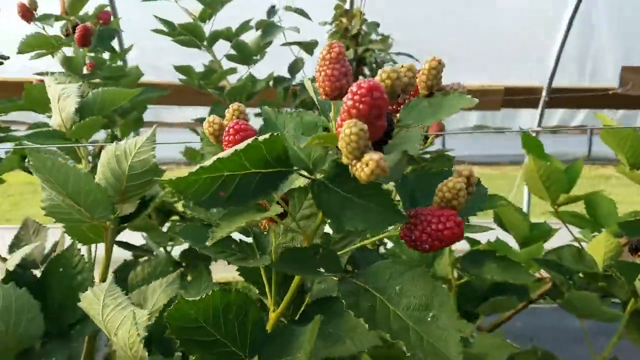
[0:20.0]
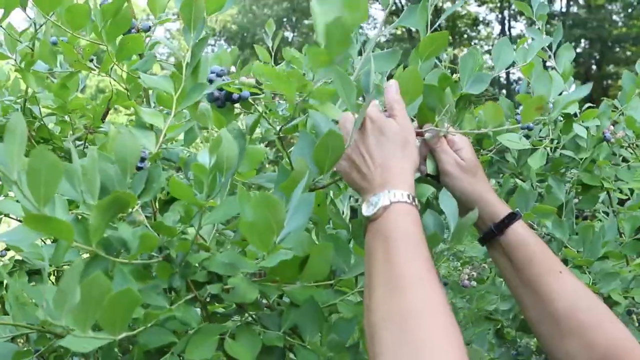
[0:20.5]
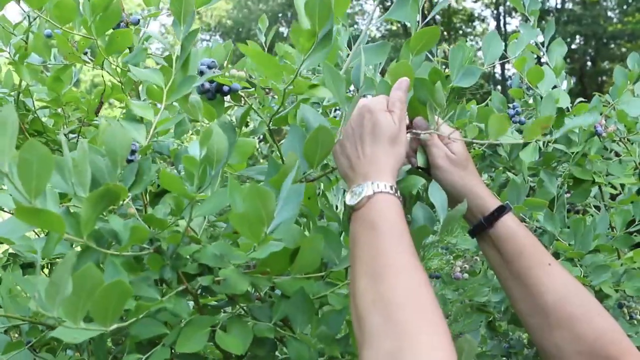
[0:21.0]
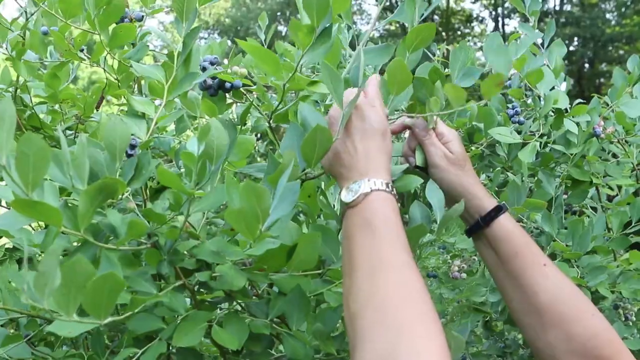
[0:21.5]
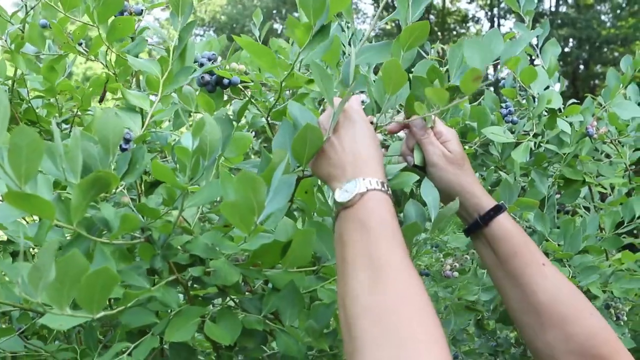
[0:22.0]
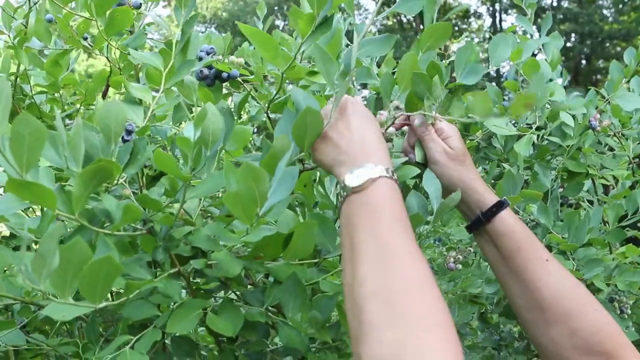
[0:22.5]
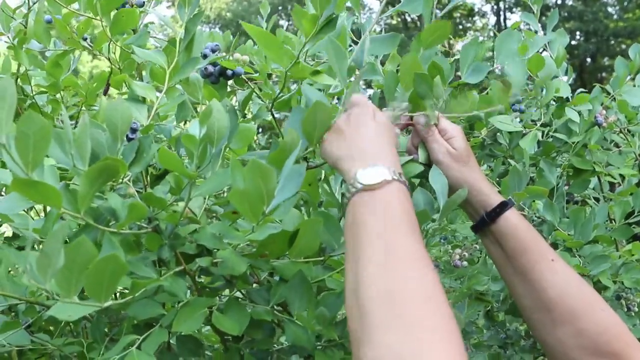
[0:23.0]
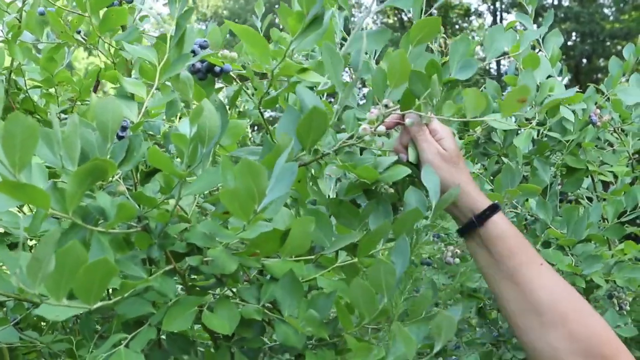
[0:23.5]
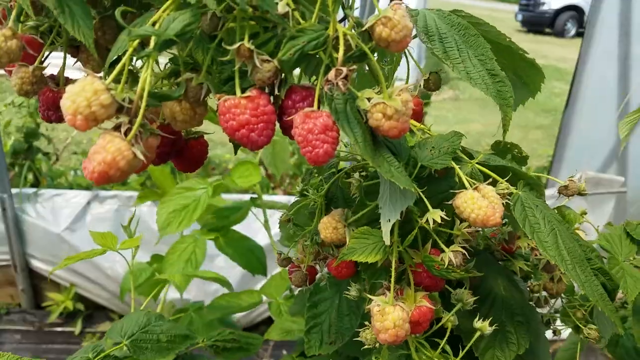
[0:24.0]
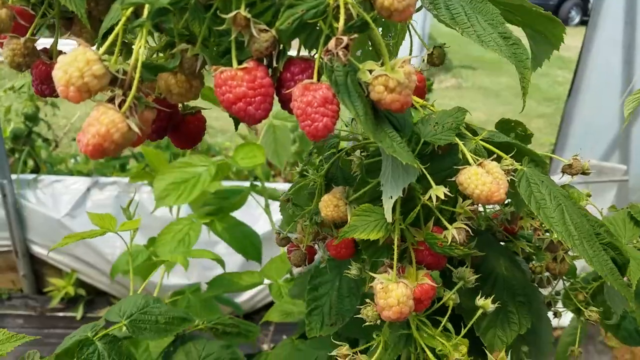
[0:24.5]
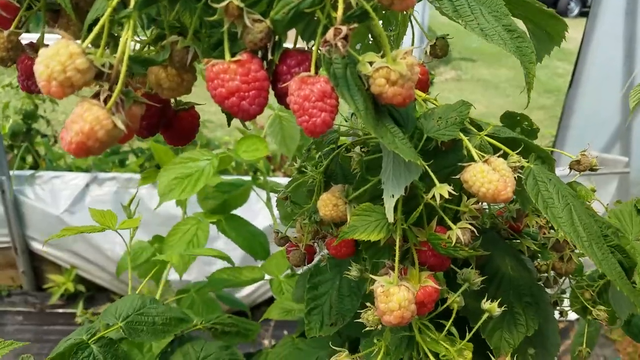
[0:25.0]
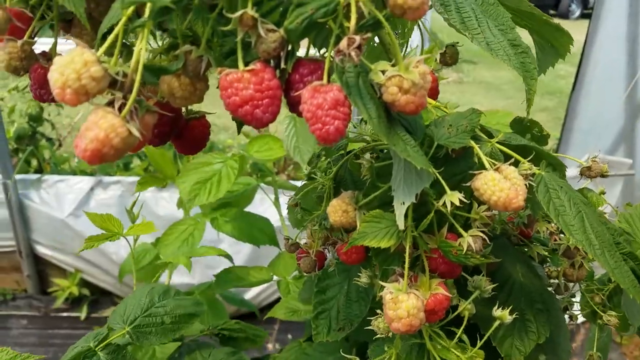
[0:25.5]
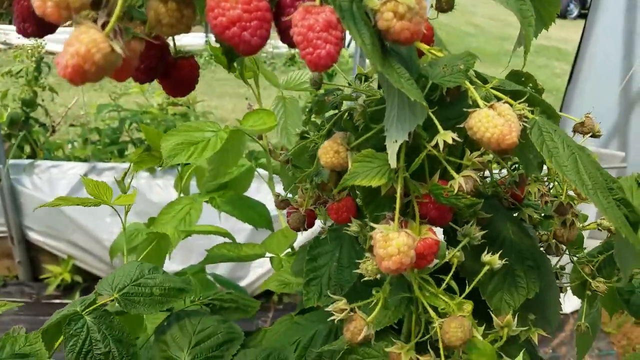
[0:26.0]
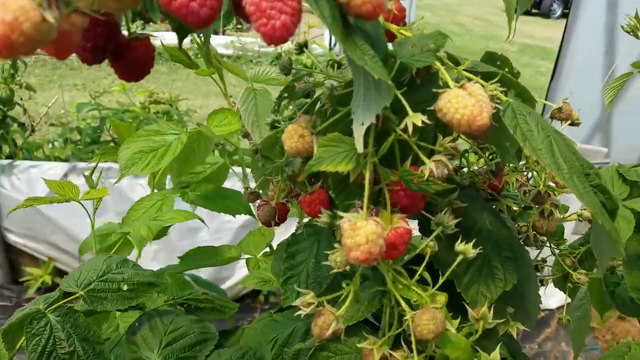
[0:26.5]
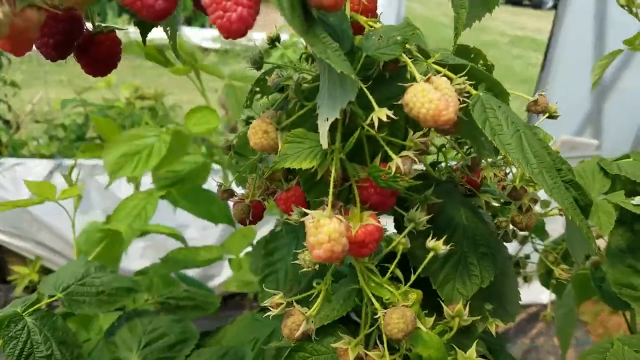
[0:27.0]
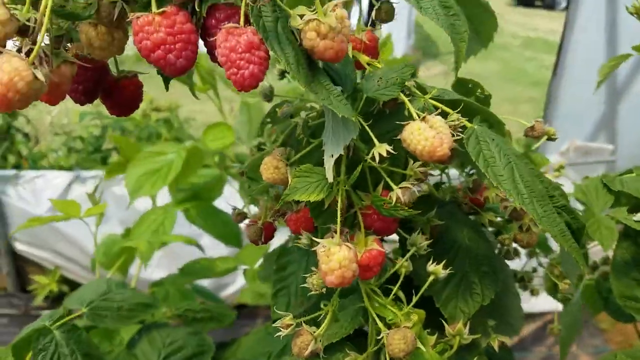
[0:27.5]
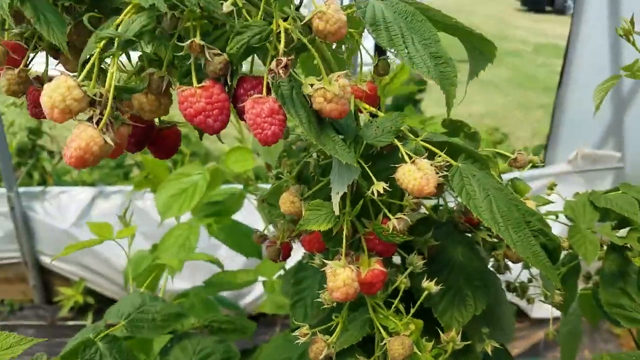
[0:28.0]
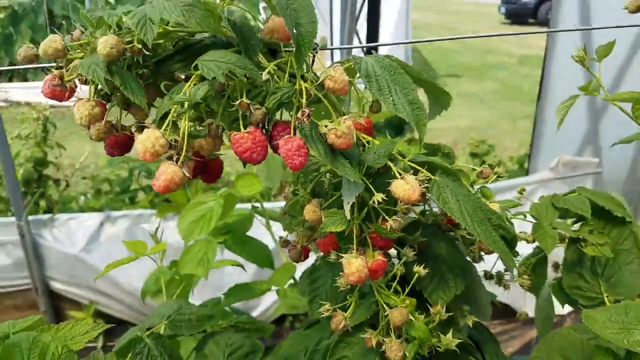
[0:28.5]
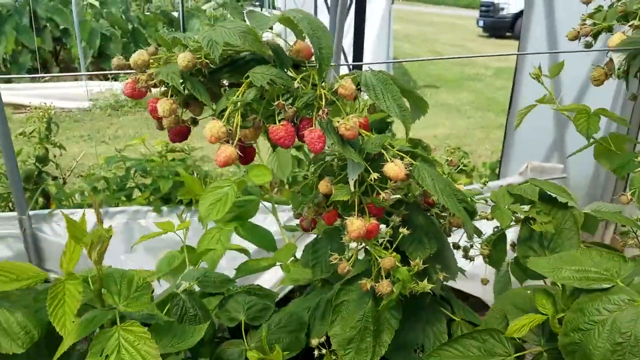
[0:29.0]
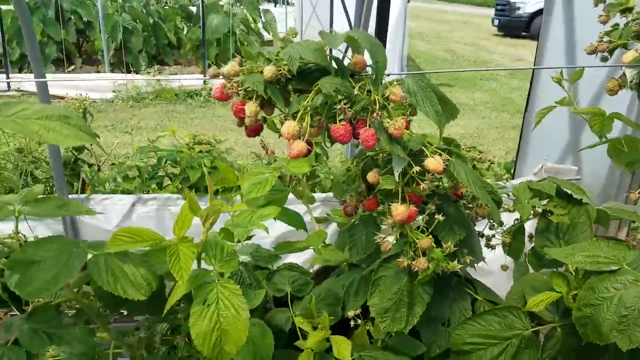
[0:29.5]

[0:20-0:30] A vine with berries in various states of ripeness is shown. Then a blueberry vine appears, and hands pick blueberries off the vine. The person has a silver watch on the left arm and a black banded wristlet on the right arm. A different berry tree follows, its berries at different stages of ripeness. The vines are attached to a sort of stabilizing line in the background. What appears to be a white tarp is visible, with grass beyond it. A line like a clothesline runs through, and the berry vine is attached to it as though it is meant to hold up the vine.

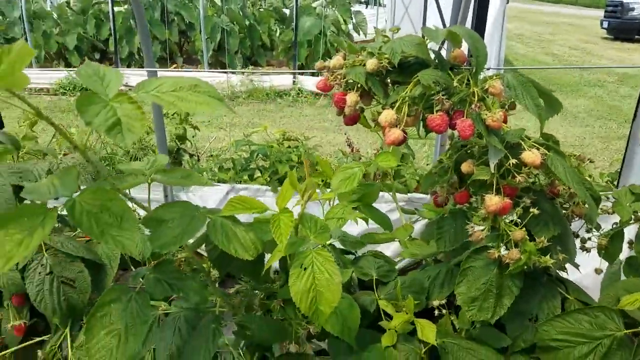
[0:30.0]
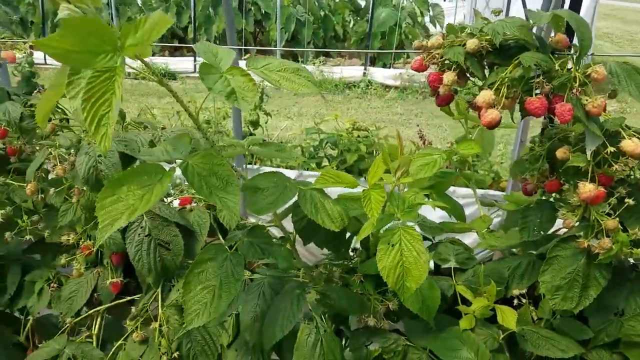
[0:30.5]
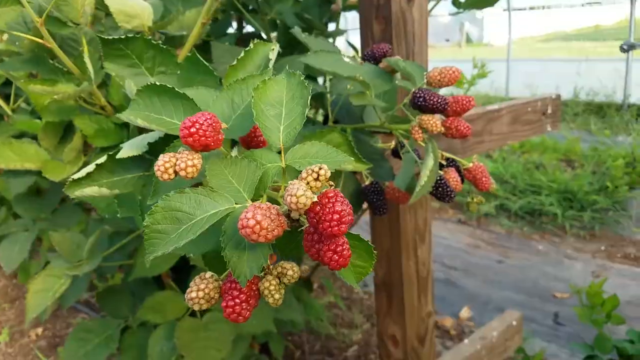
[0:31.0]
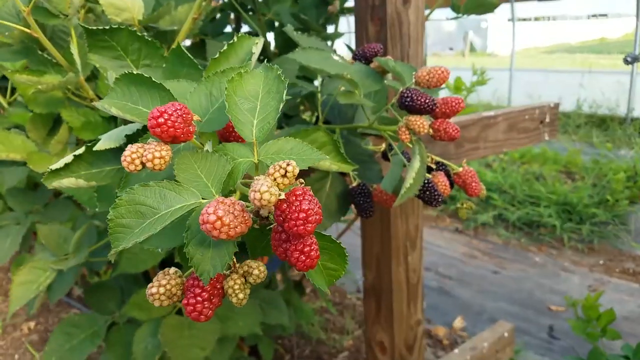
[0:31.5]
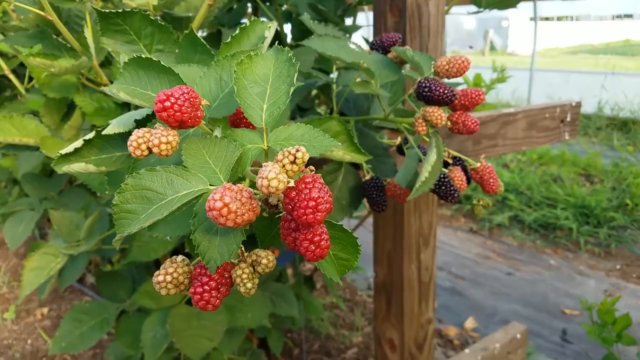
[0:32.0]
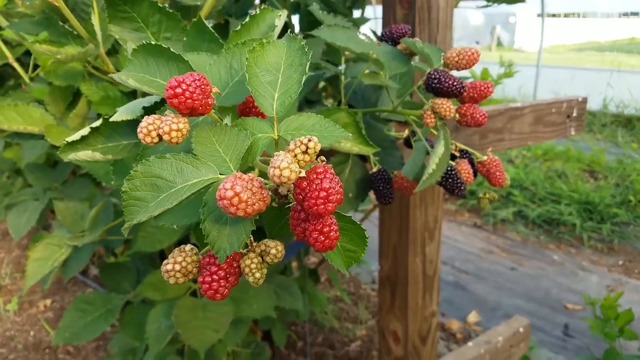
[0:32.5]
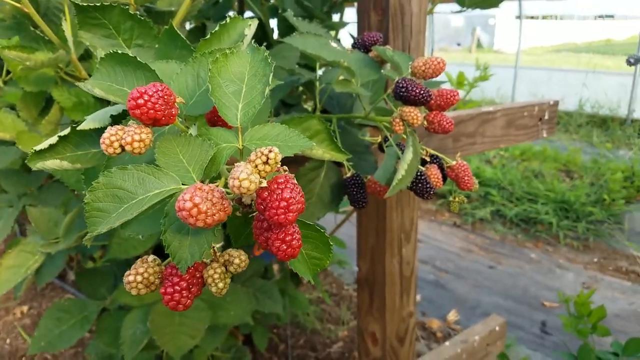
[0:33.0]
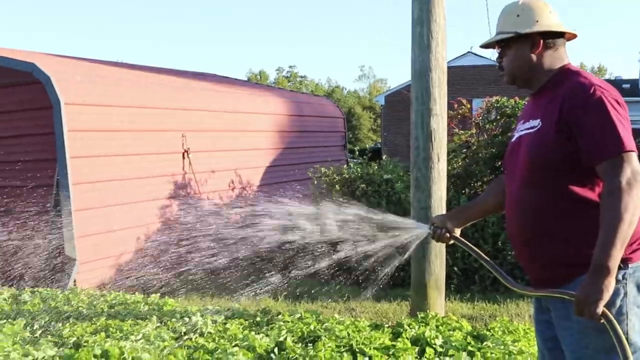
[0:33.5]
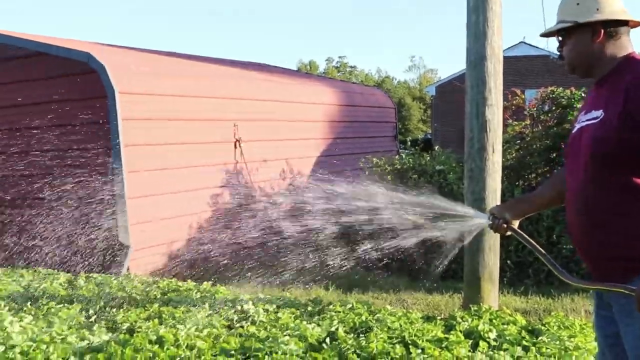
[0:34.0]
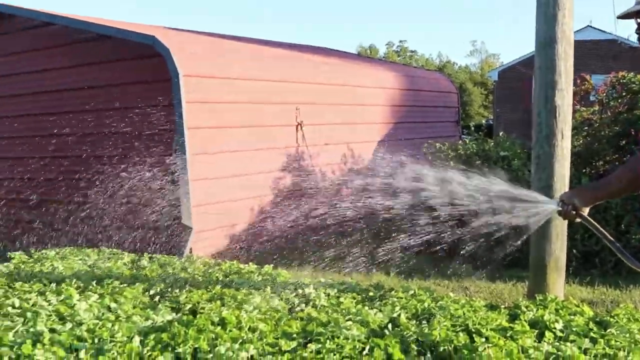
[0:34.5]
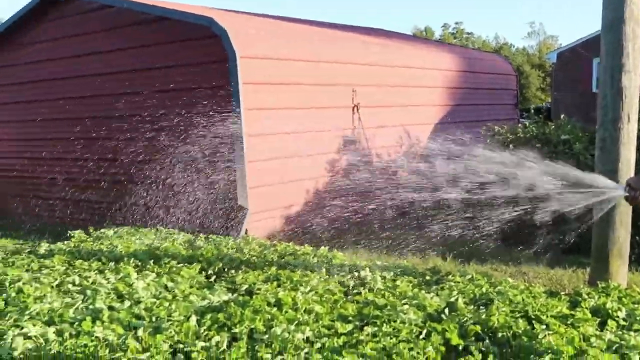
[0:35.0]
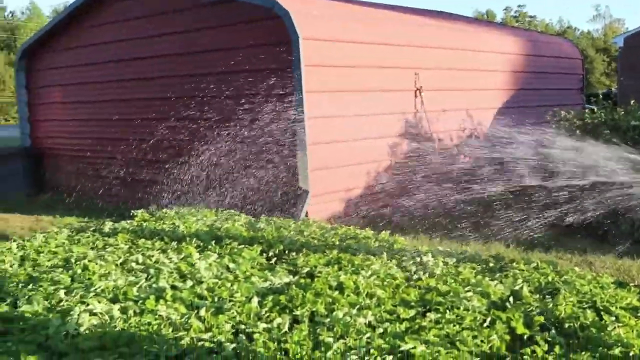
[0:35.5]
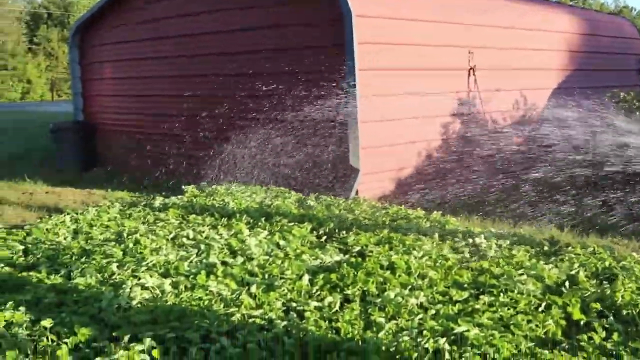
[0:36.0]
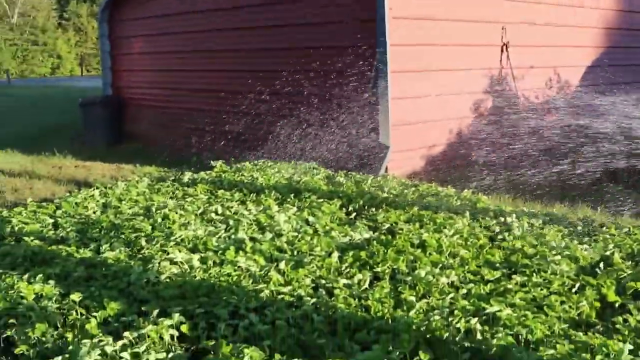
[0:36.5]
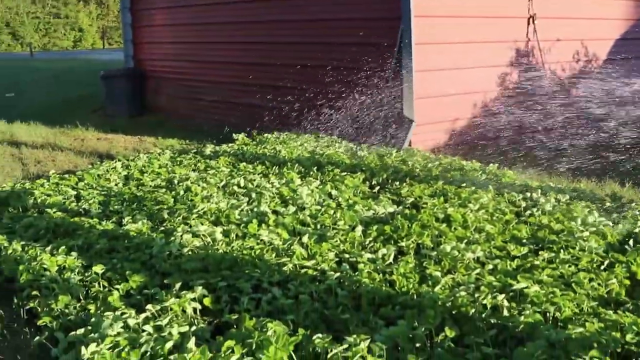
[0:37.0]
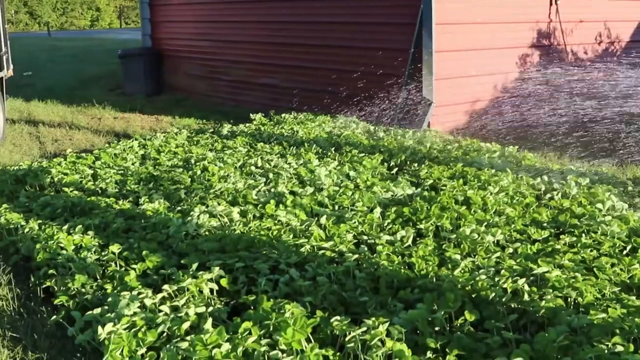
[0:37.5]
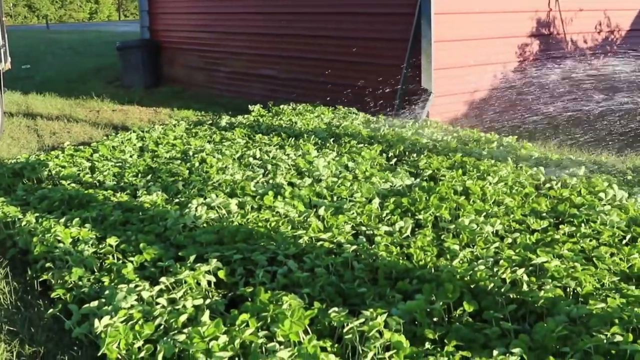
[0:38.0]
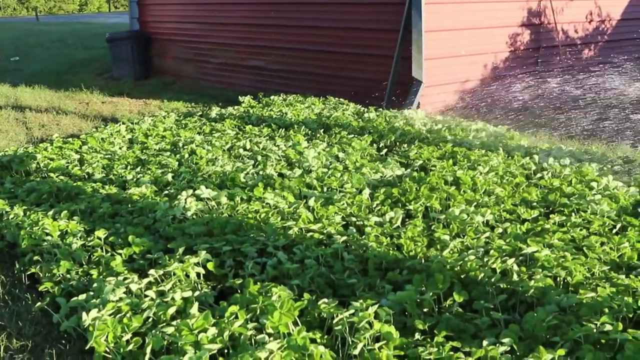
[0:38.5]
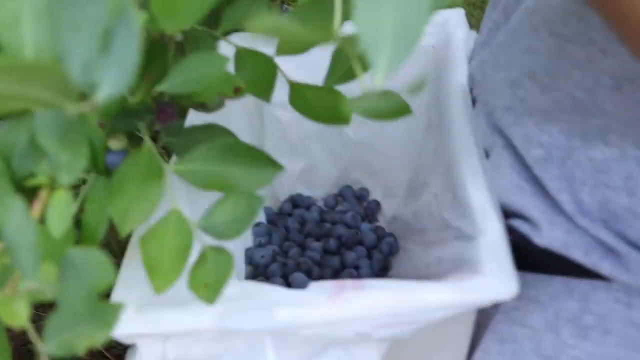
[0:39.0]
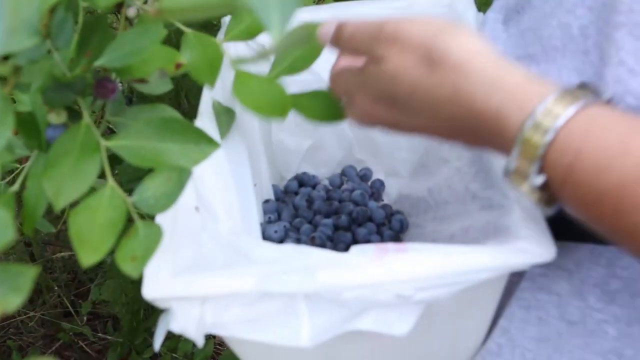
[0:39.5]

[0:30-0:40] A raspberry vine is in view, and beyond it more crops grow behind an enclosure. The enclosure has a white tarp around the side and around the base. Green grass is growing. A truck is off to the right in the background, to the right of the rear crop. In the foreground are berry vines, held up by a line like a clothesline, as though it props the vine up and allows it to grow. The berries are in various states of ripeness. A person wearing blue pants, a maroon shirt with white writing and a safari hat is watering crops. A red or light pink barn or outhouse, sort of a storage house, is visible, with a garbage can sitting next to it. Grass is visible in the distance. Then someone picks blueberries from a blueberry vine and puts them into a container.